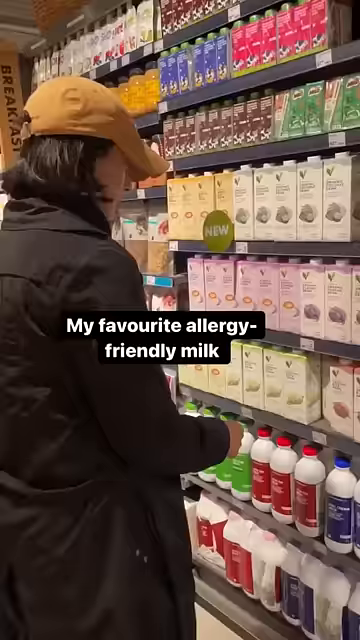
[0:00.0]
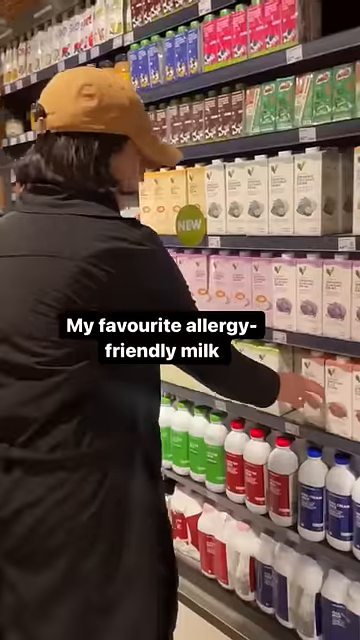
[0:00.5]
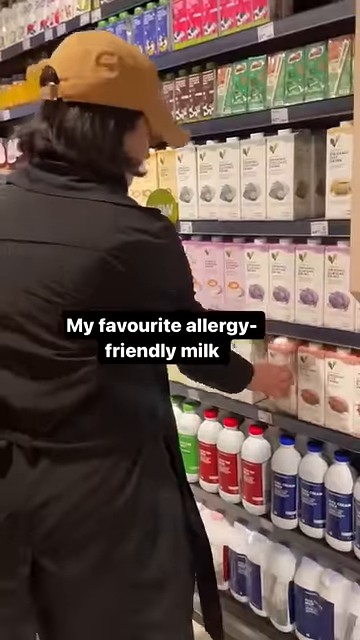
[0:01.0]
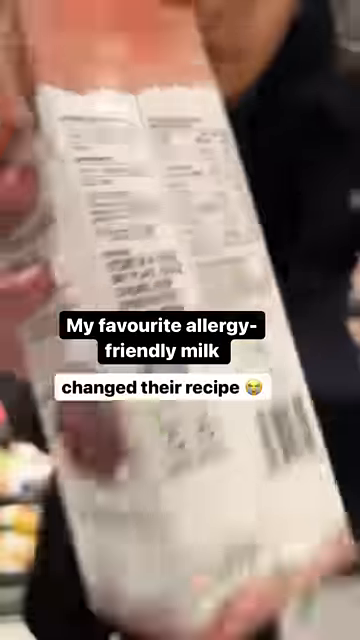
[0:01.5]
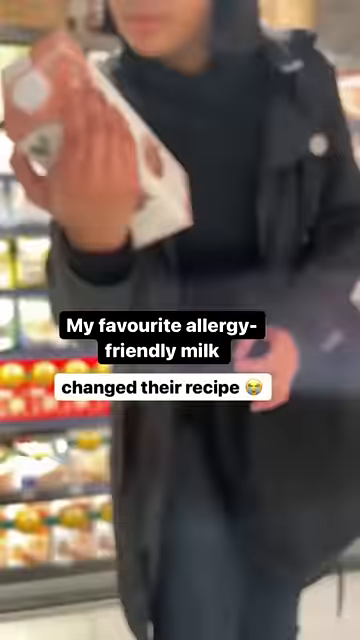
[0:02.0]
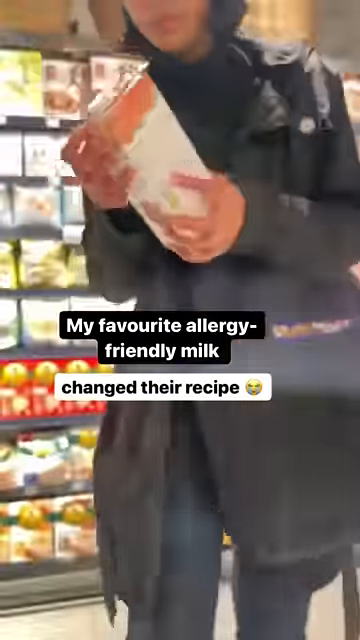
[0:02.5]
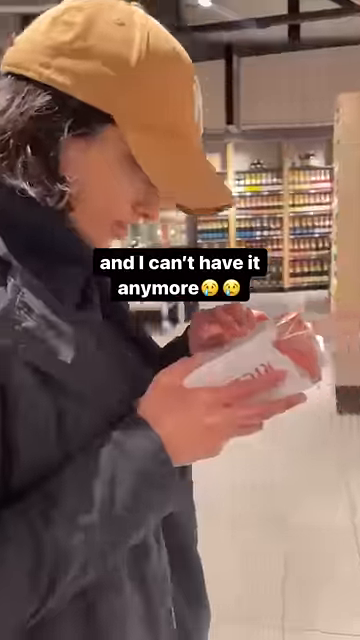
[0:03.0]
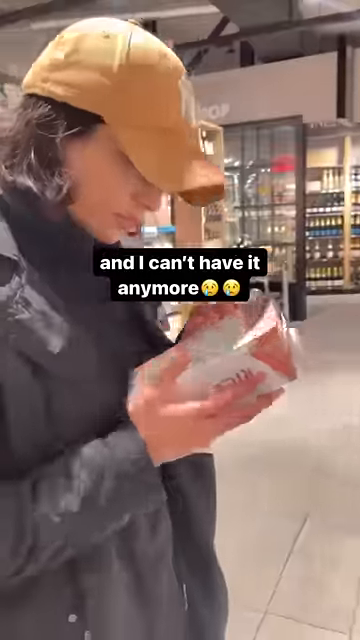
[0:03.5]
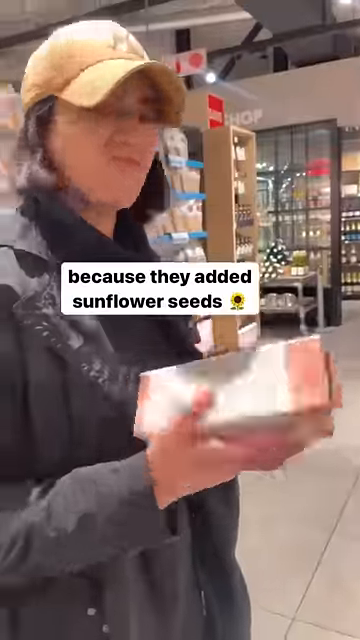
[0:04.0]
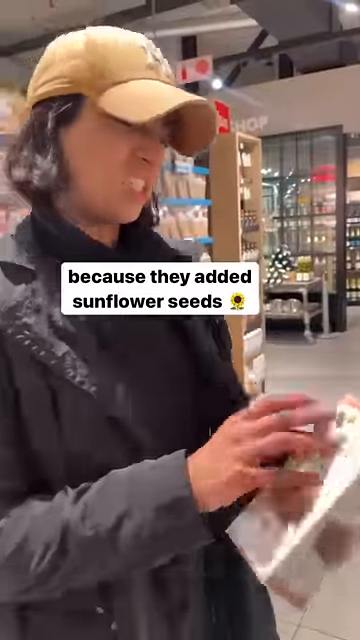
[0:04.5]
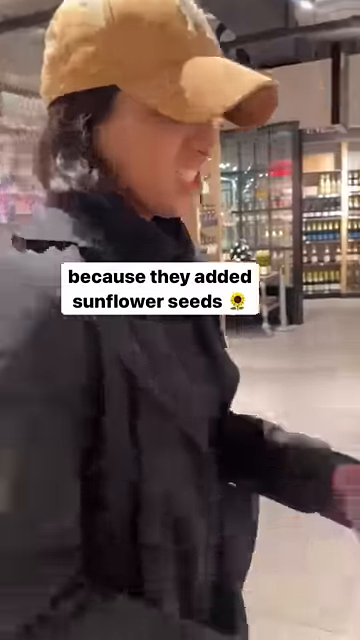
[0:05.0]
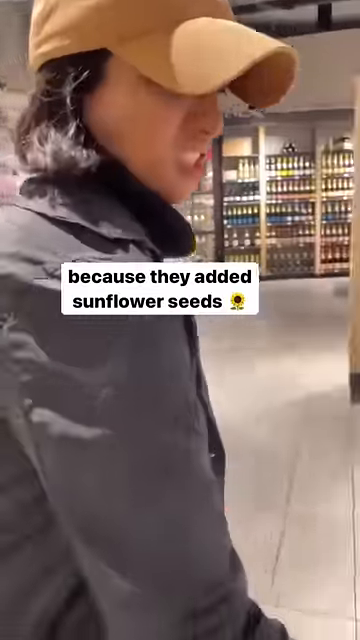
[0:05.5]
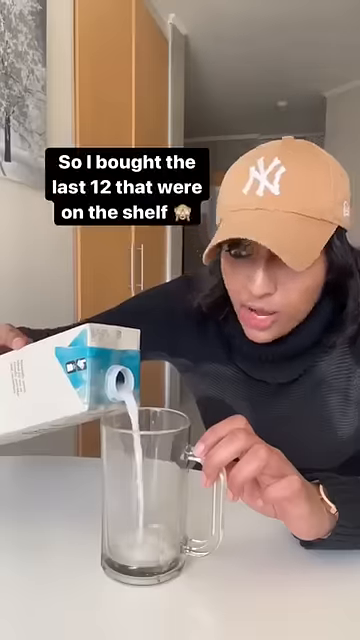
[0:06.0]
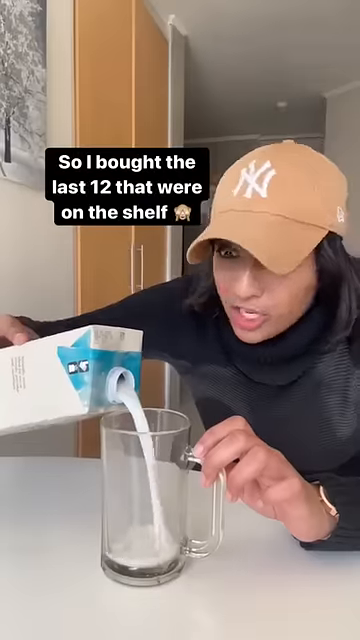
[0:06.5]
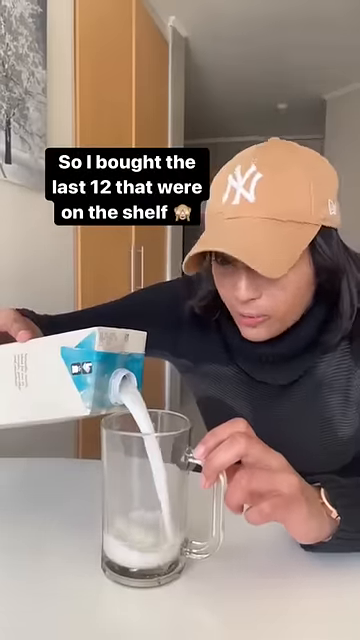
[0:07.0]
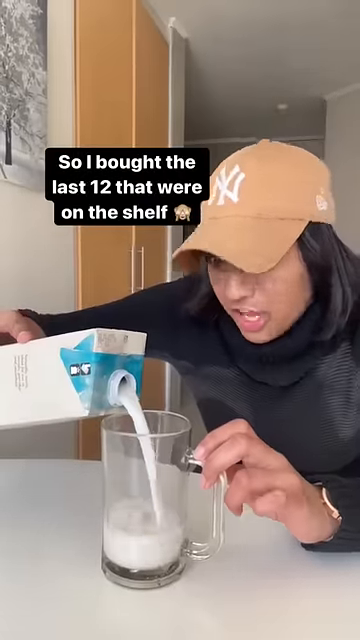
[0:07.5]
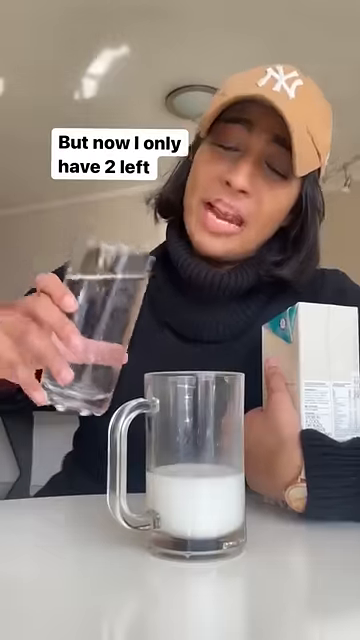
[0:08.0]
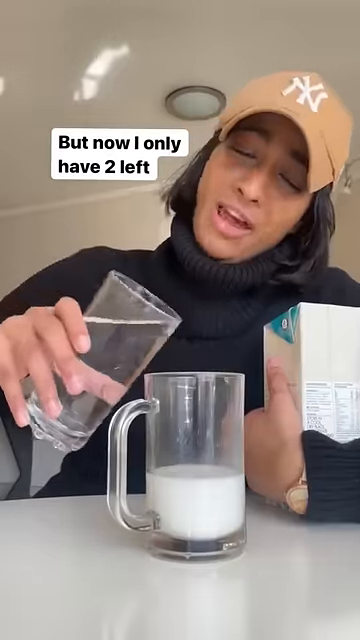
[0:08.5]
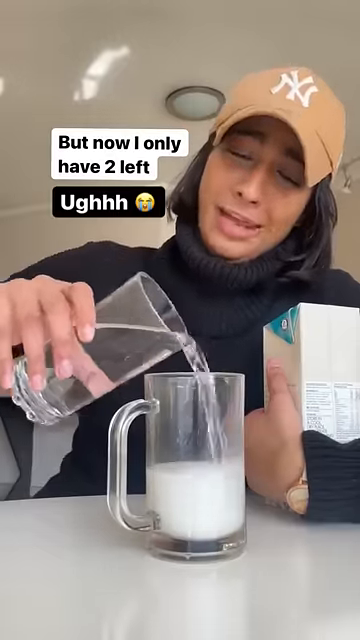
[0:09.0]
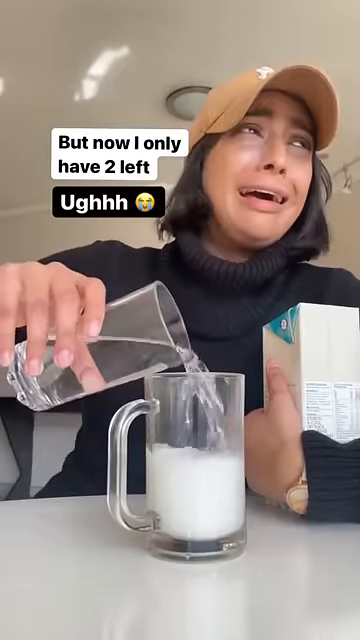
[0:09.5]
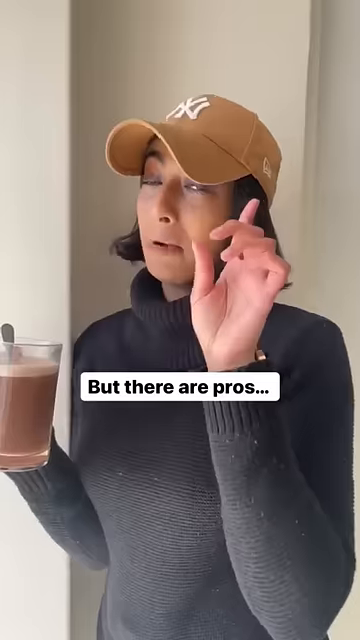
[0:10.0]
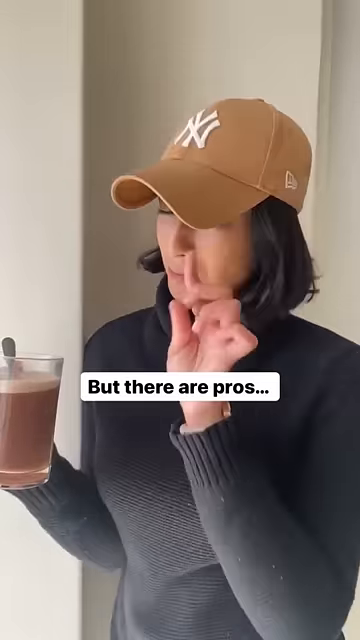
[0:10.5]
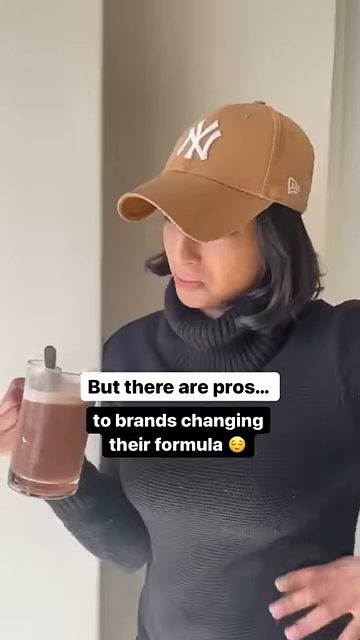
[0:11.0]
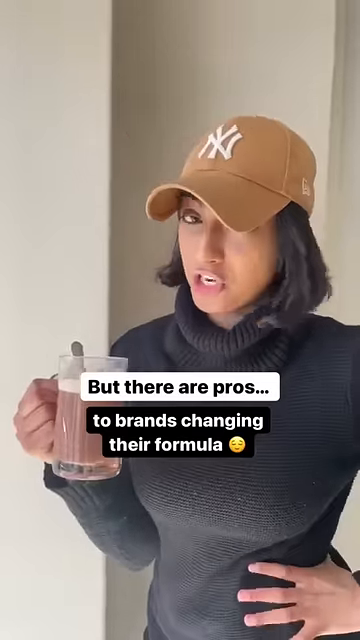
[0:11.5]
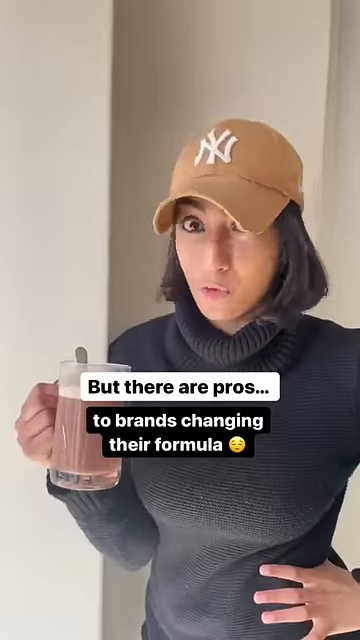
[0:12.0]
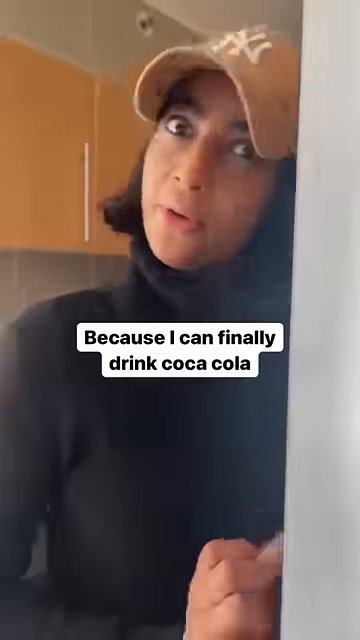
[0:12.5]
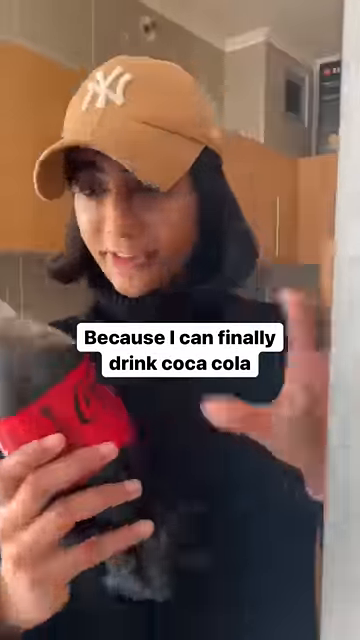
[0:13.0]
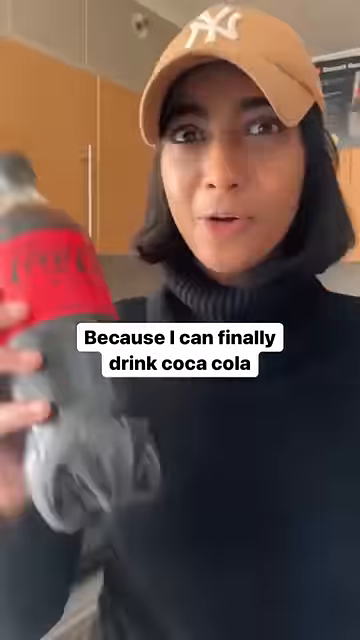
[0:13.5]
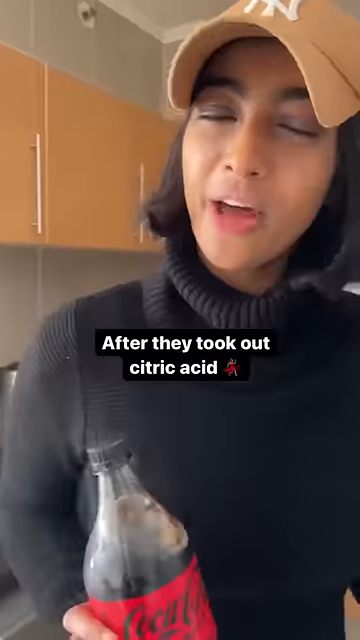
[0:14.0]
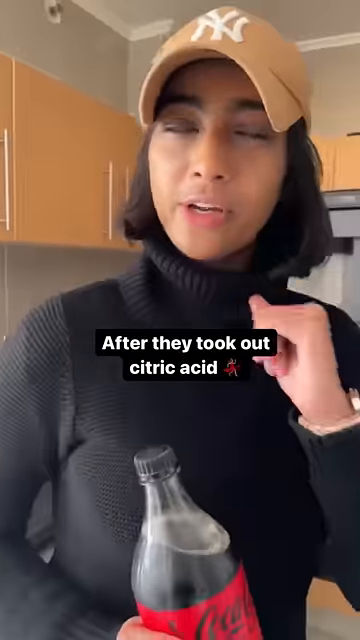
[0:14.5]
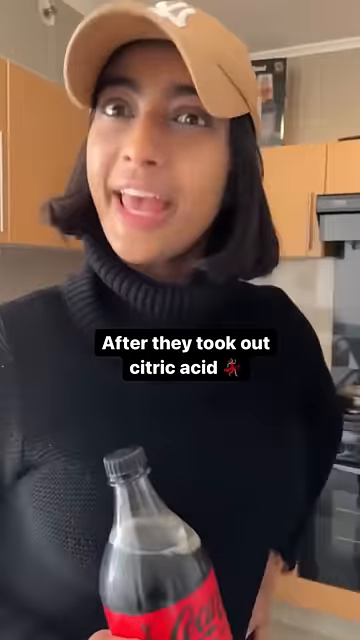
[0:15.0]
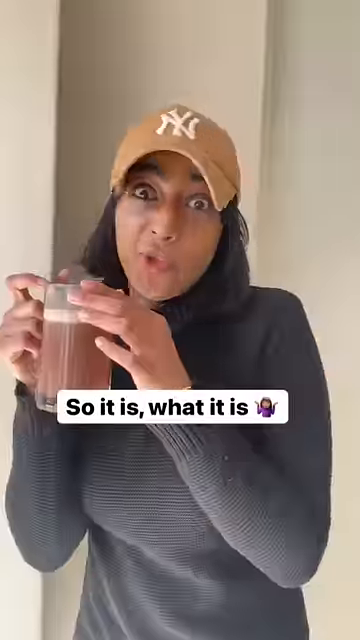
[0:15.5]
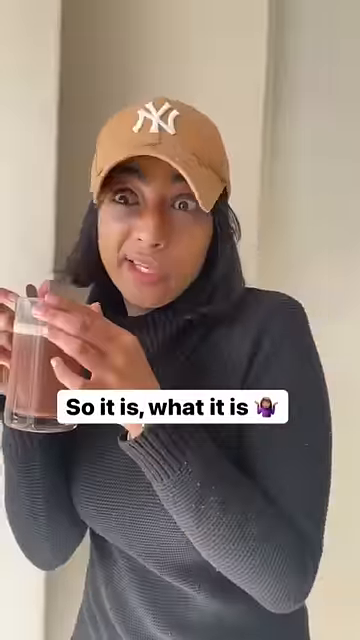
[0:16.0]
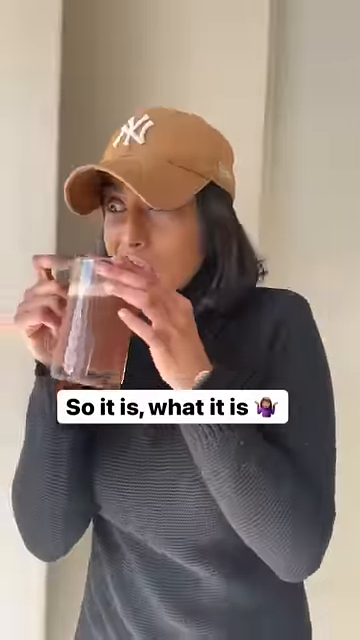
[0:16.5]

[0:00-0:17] A female creator is in a video about milk, which she is possibly advertising or complaining about. The video is made of very quick transitional clips, with on-screen text that passes by fast. The text has her complaining that milks in supermarkets are not friendly for, it seems, her own health, in a kind of mocking, joking way, and talks about her finding milks that seem to finally be good for her gut health, which she refers to as friendly milk. The text also complains about brands changing their formulas while also wanting them to; visually, the text is kind of confusing and is probably a mockery or a deliberate, comedic self-contradiction. In an exaggerated attempt to change the recipe, she adds water to the milk. She looks at ingredients and is disgusted by them, and seed oil is mentioned.